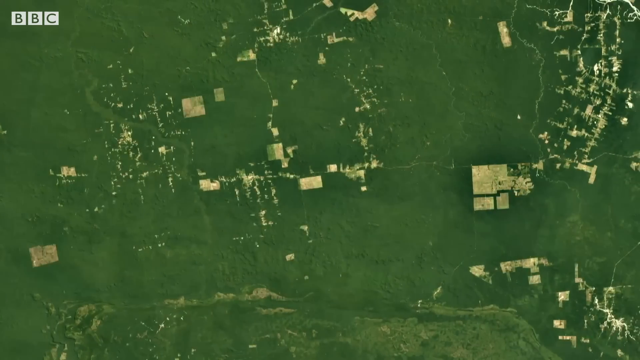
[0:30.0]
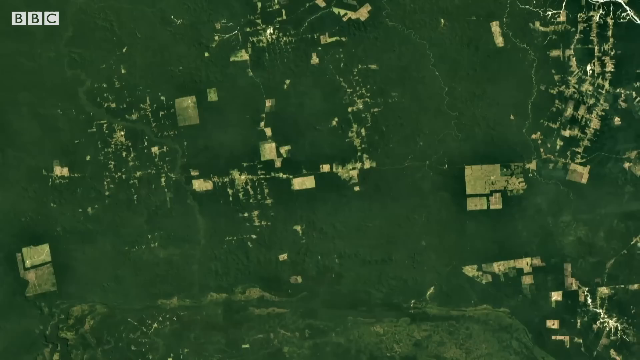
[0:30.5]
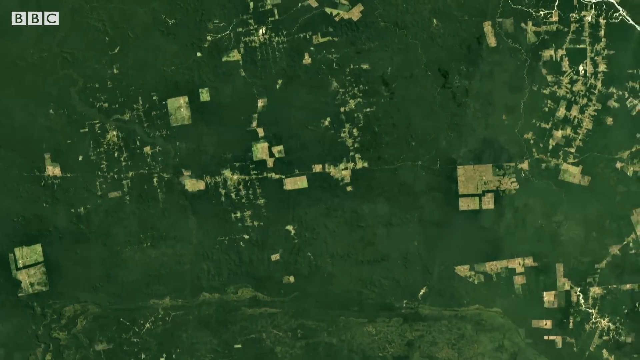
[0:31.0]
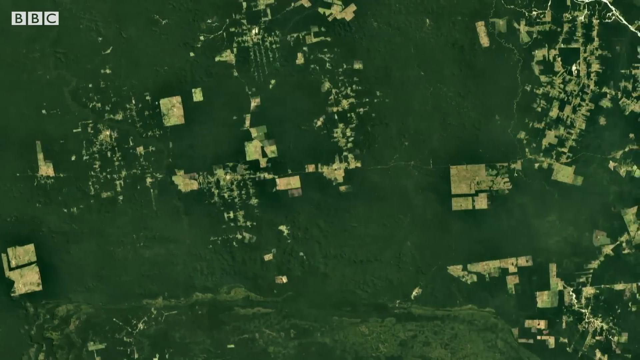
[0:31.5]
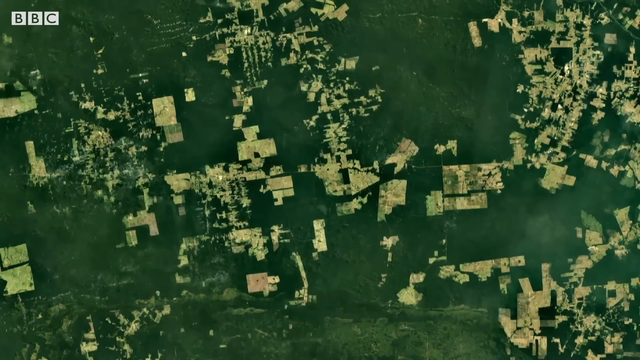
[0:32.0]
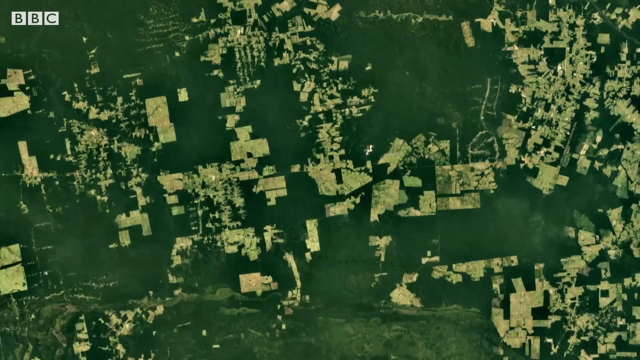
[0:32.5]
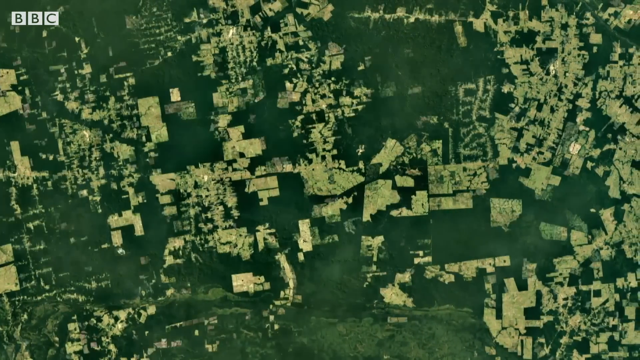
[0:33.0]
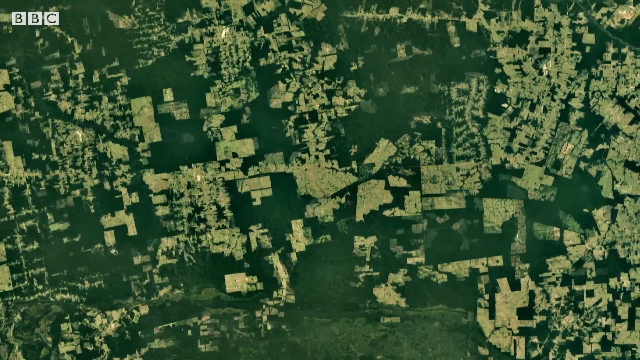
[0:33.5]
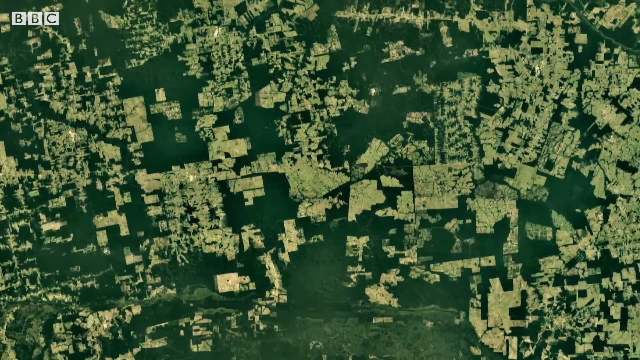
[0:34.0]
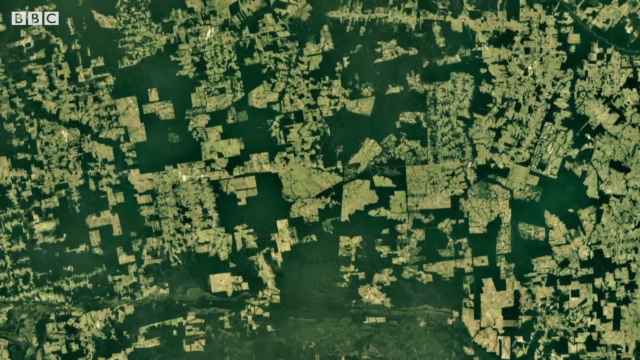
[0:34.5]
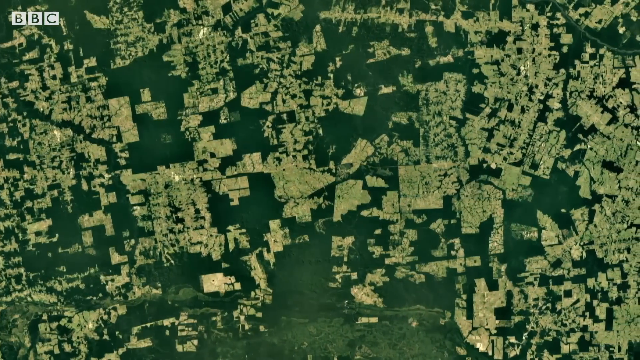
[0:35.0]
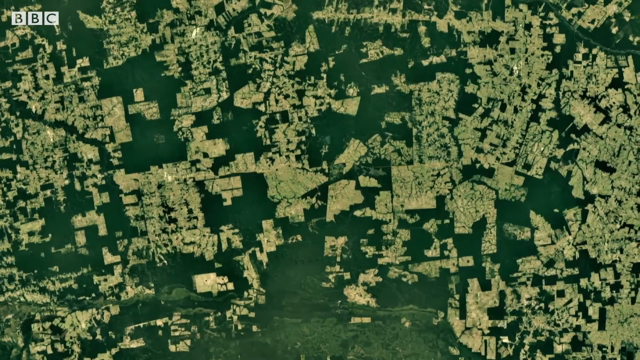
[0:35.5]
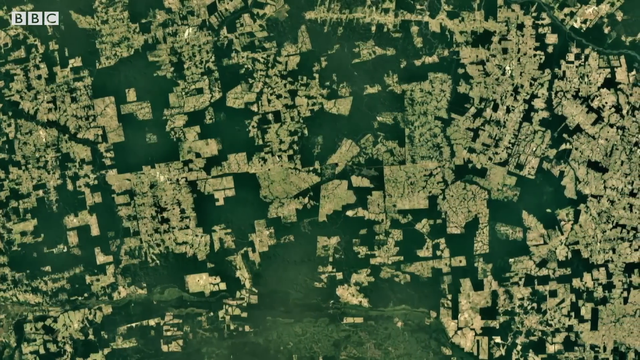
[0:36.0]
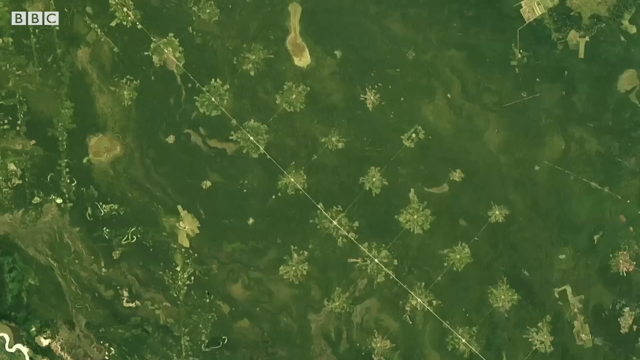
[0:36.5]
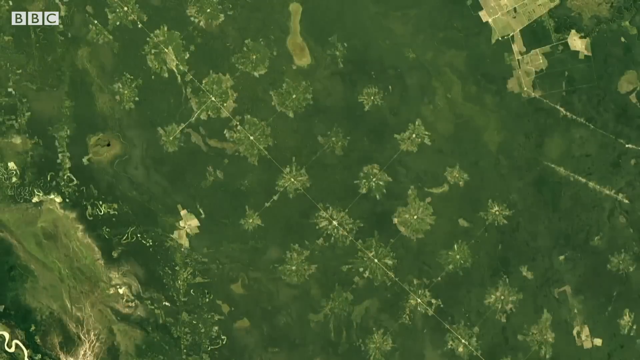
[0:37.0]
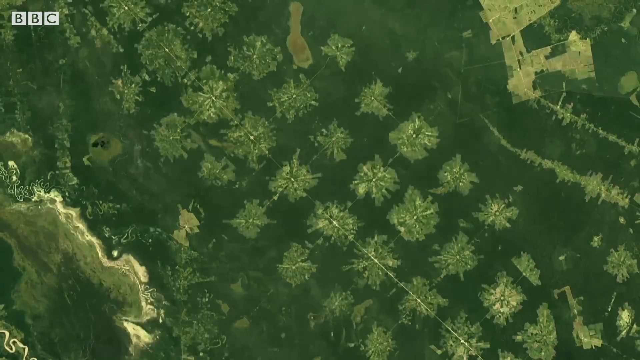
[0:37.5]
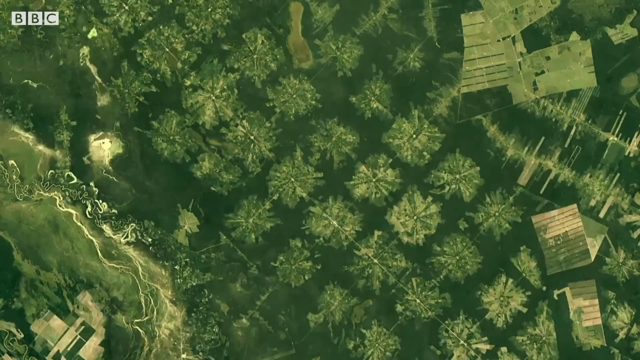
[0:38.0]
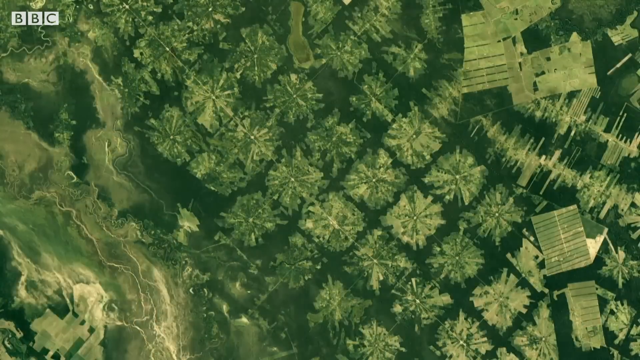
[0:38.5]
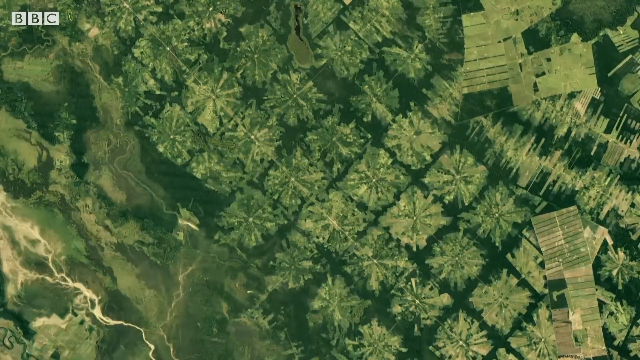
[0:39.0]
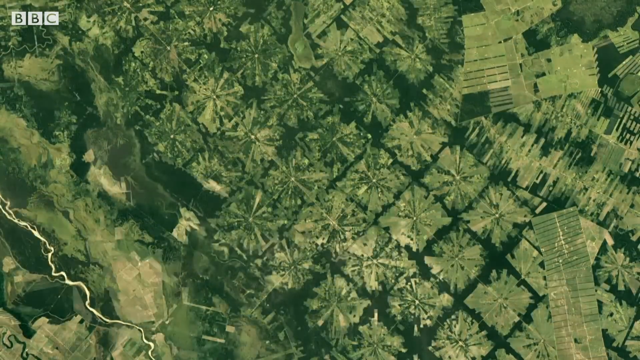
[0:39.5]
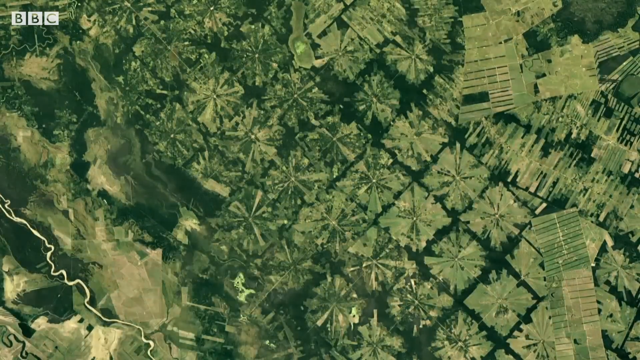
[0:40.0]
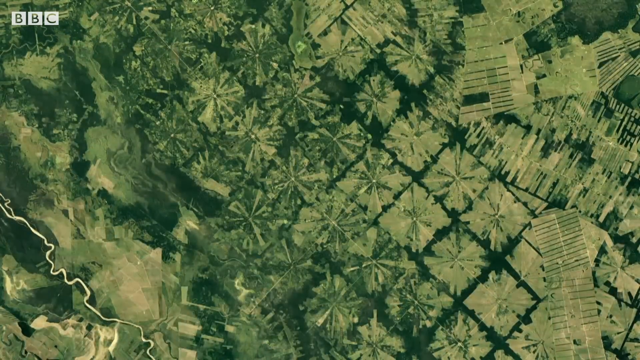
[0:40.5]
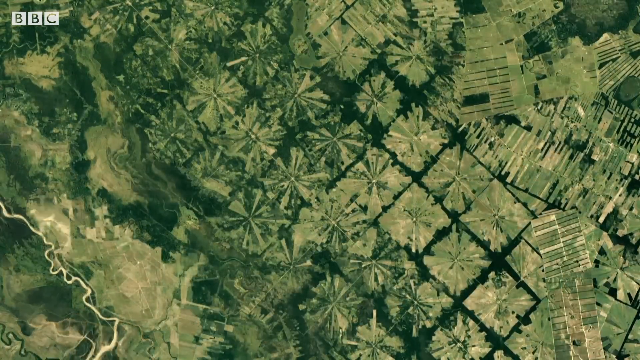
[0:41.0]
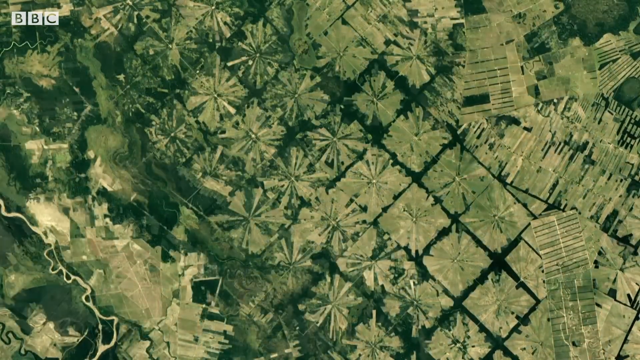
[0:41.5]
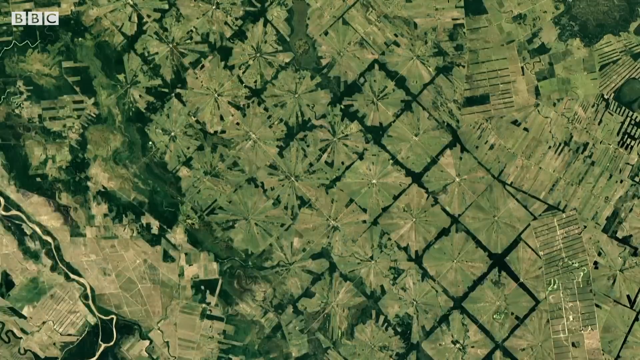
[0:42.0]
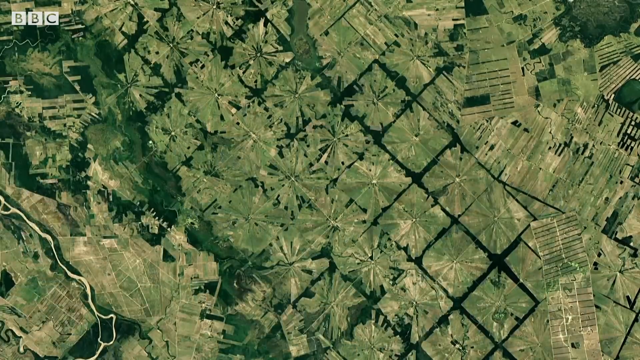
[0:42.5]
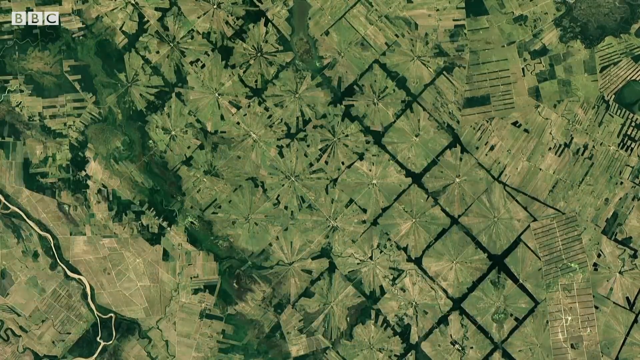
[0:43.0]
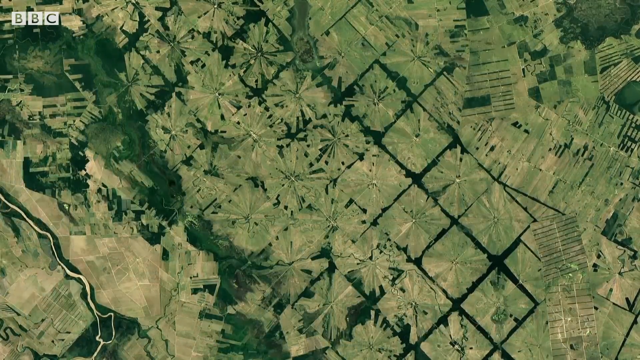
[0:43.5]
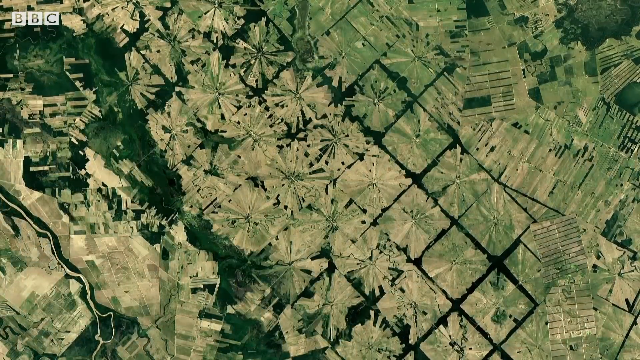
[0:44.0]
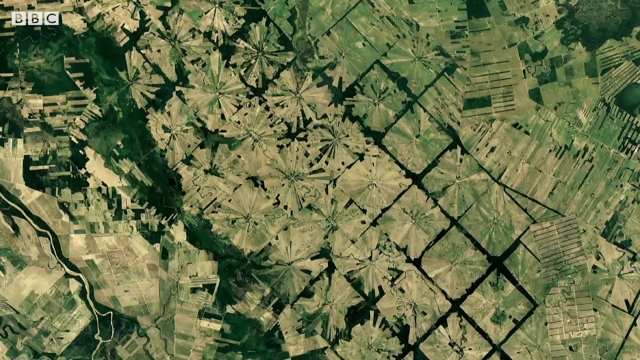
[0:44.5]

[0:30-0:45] The same sped-up process continues, with many more light yellow patches kind of spreading around the surface. After a transition, different squares, almost like different fields, kind of spread outwards, almost like stars sprouting out of the ground. This goes on for a fairly long time, going from dark green to pale yellow, then kind of back to green a little, and eventually becoming very sandy and pale beige looking.